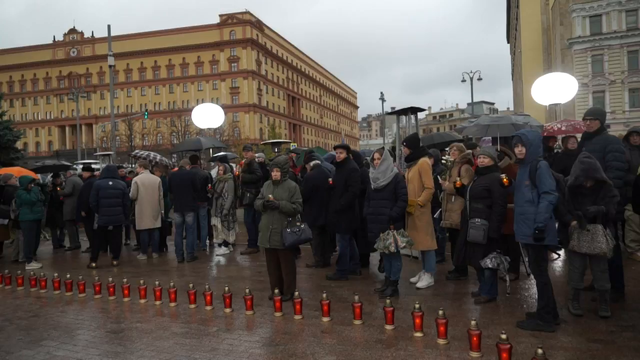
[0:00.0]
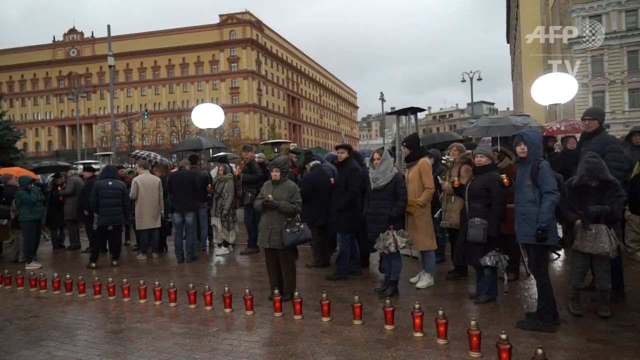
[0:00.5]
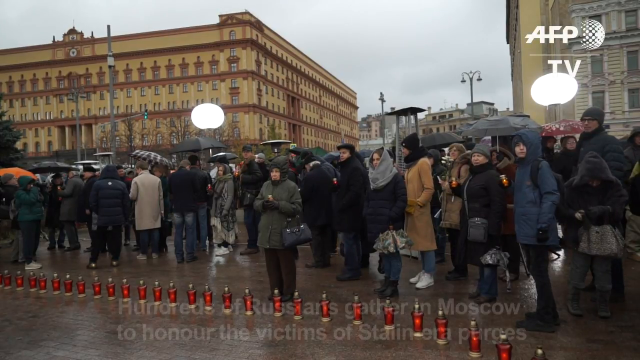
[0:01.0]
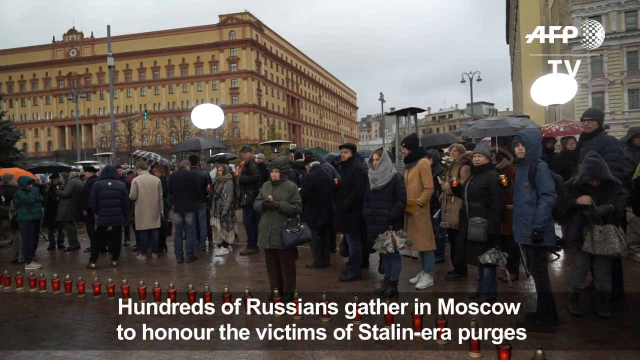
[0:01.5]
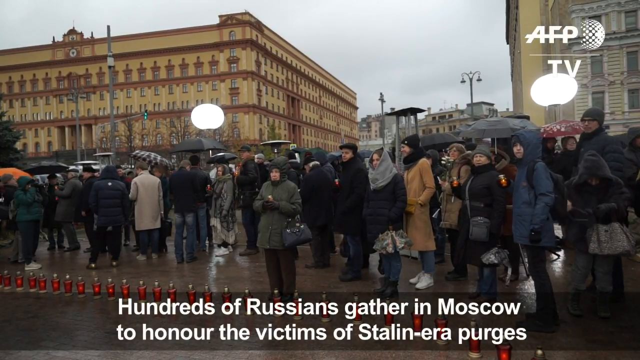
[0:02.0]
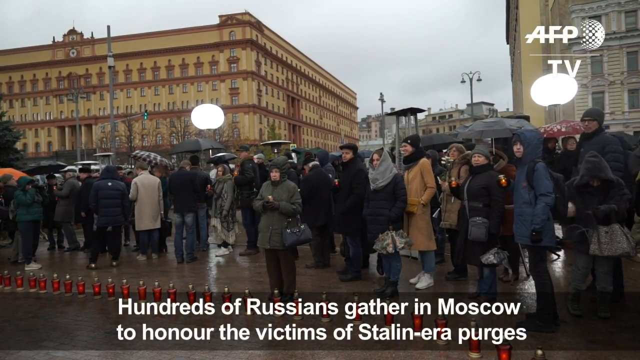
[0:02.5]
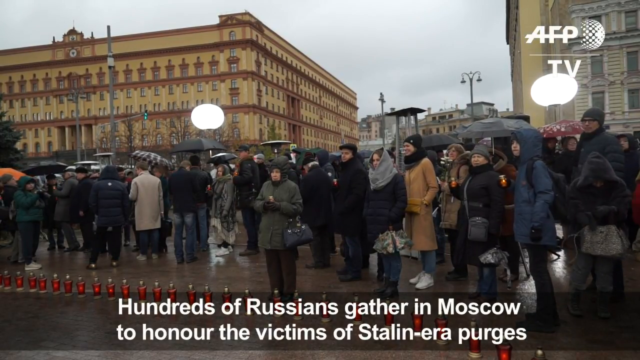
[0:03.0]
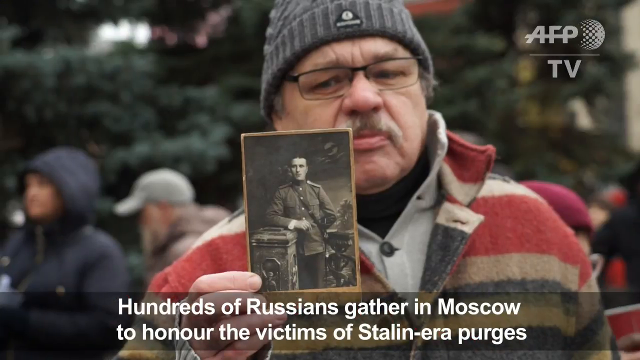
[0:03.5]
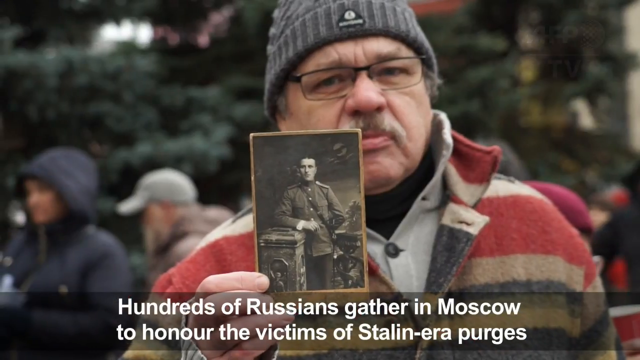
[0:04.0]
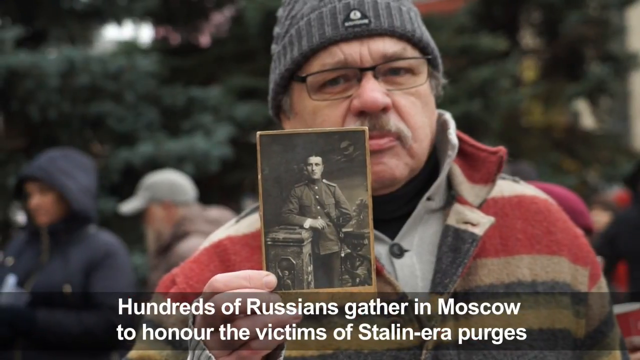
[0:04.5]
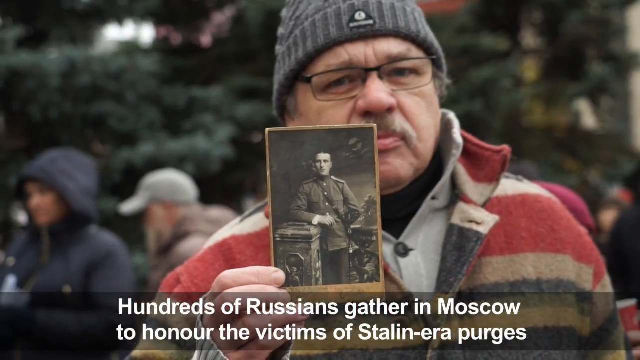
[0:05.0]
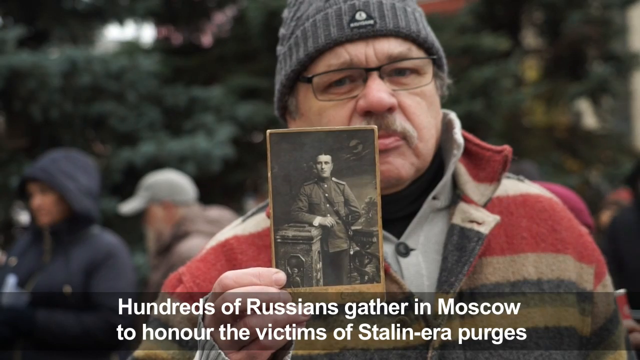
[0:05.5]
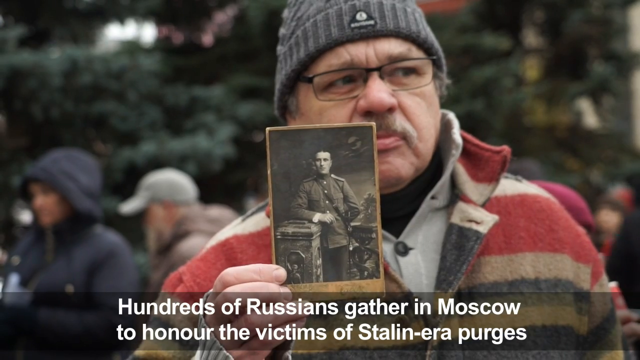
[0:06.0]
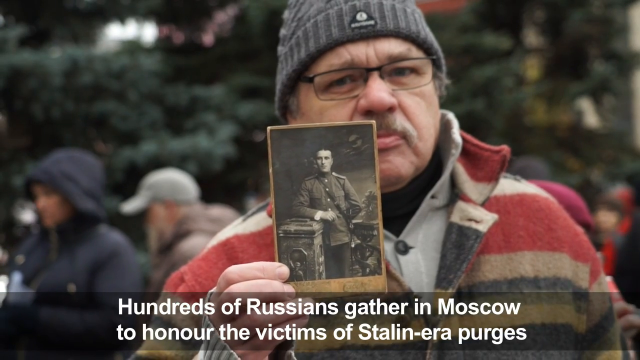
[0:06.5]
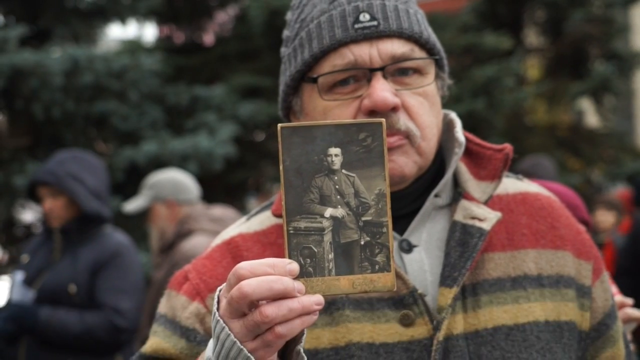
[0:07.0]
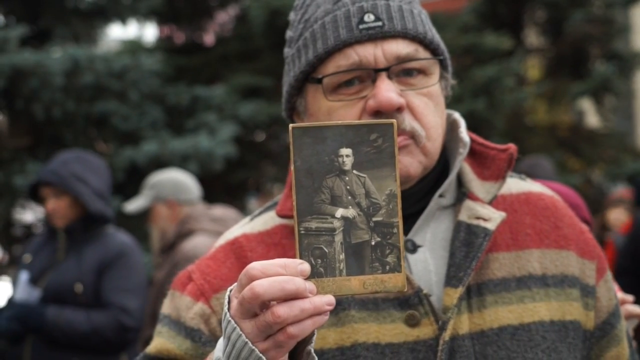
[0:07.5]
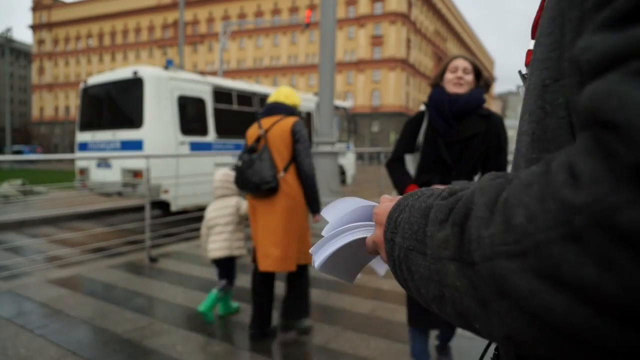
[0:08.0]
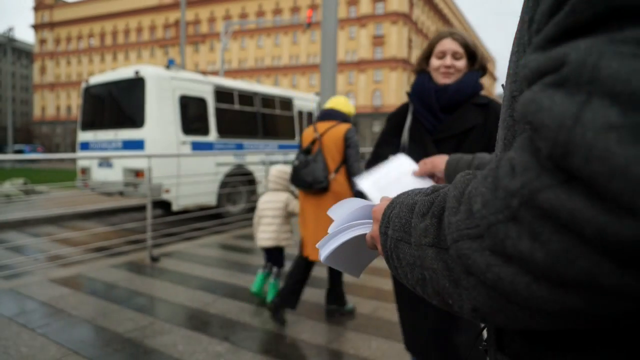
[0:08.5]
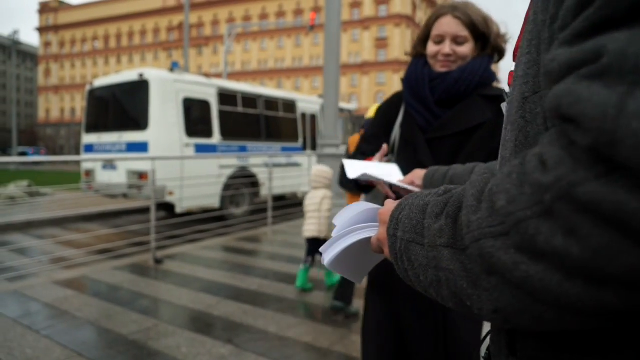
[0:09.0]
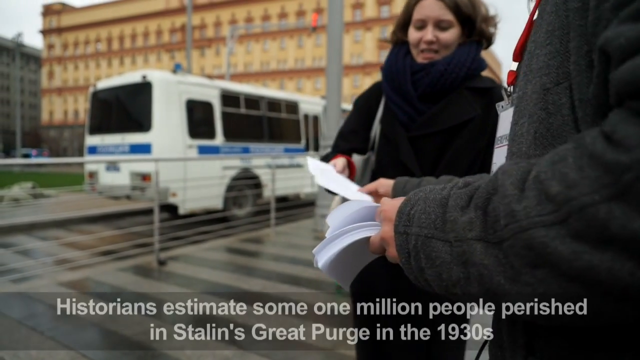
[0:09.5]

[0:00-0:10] A crowd of people stands outdoors, bundled up in jackets, with umbrellas; the day is overcast and not nice. White text reads "hundreds of Russians gather in Moscow to honor the victims of Stalin-era purges." Next, a man holds up a black-and-white photograph of what looks like a soldier. The man wears a gray sweatshirt with a multicolored red, white, blue and beige sweater over it, a beanie hat, rectangular glasses and a mustache; he looks middle-aged, maybe in his 50s or 60s. The man in the photograph poses with his arm on some type of structure. Then someone whose face is not visible hands out white pieces of paper, giving one to a young woman, and a bus drives by.